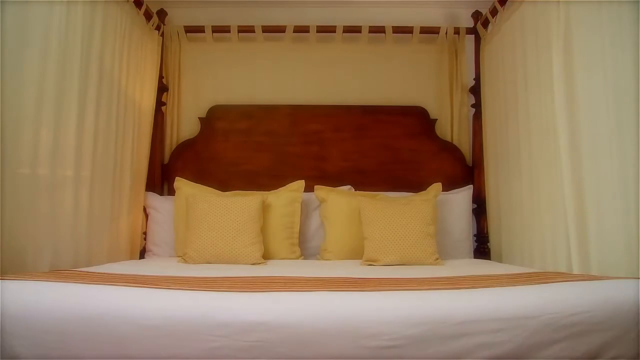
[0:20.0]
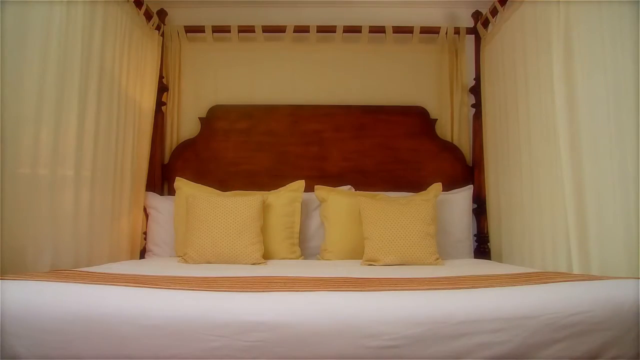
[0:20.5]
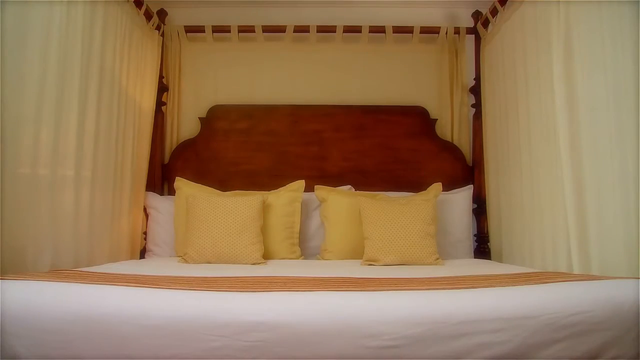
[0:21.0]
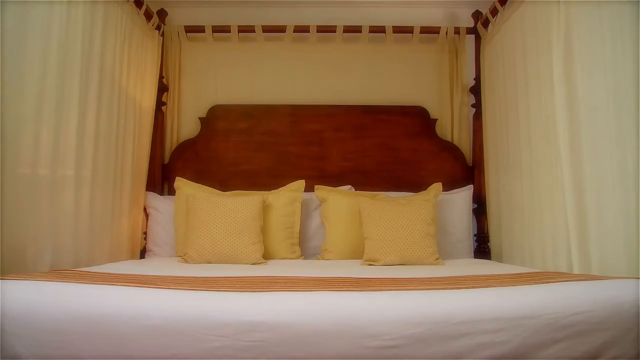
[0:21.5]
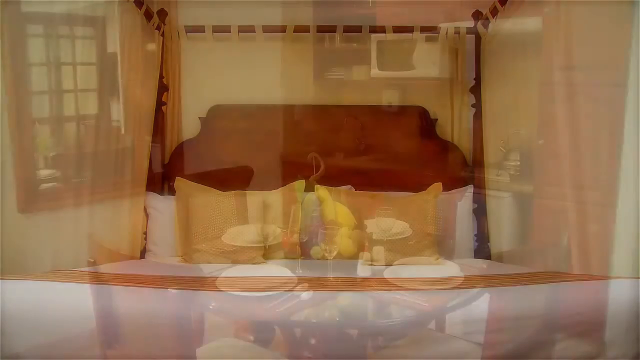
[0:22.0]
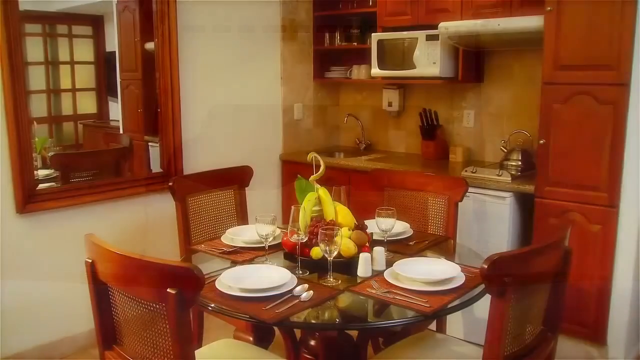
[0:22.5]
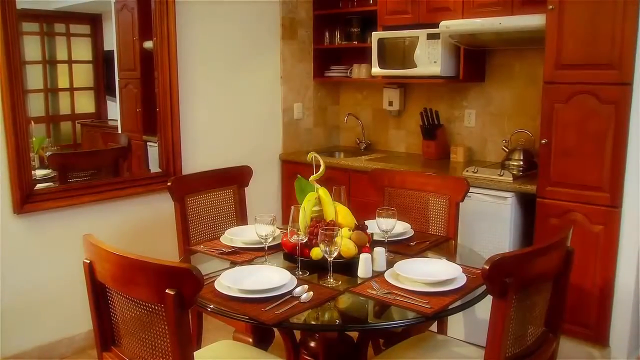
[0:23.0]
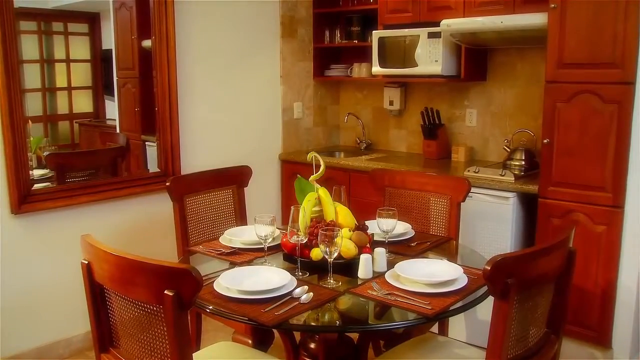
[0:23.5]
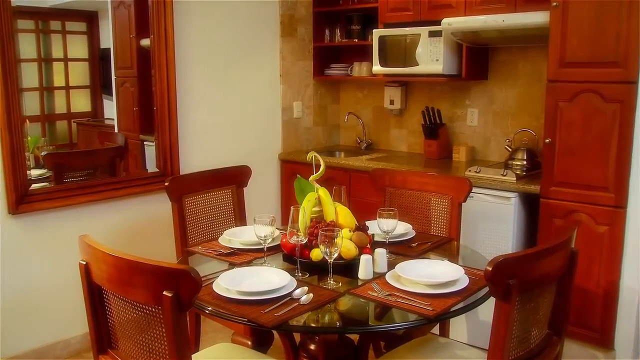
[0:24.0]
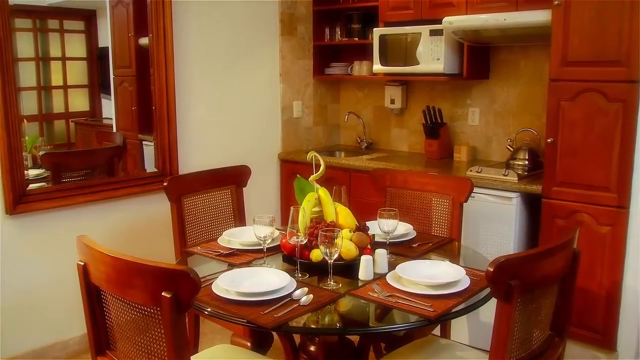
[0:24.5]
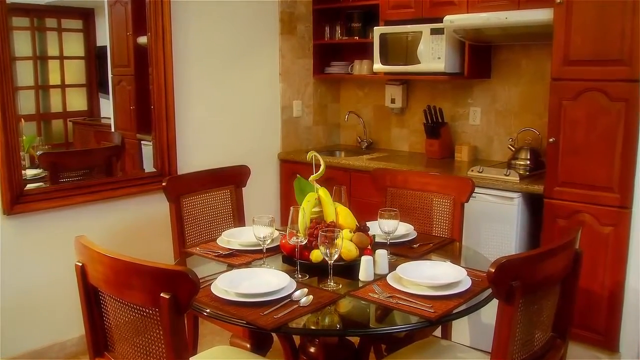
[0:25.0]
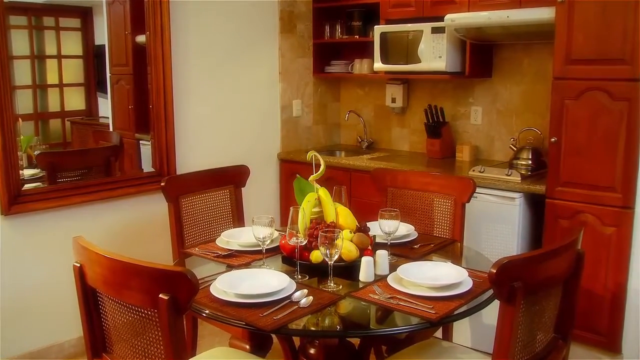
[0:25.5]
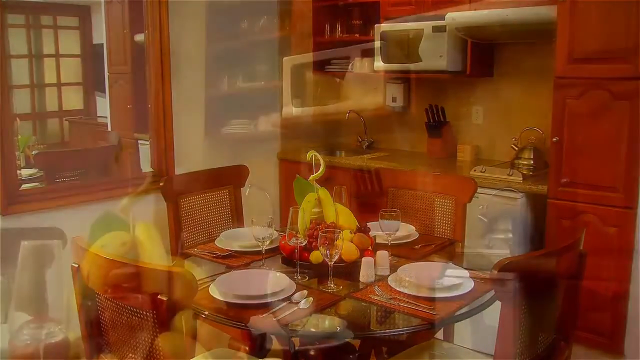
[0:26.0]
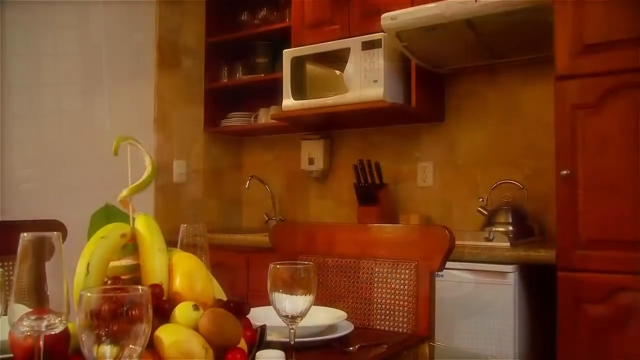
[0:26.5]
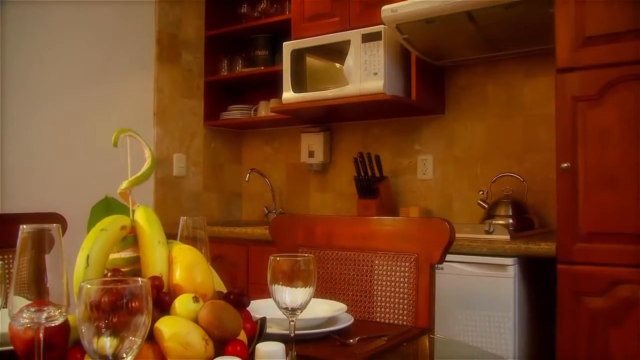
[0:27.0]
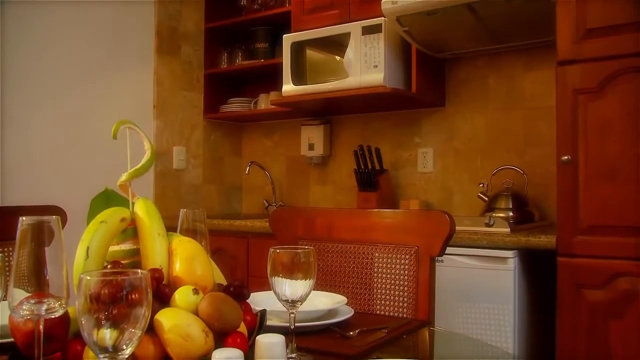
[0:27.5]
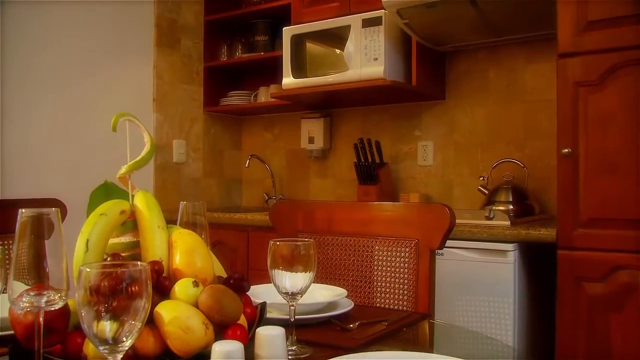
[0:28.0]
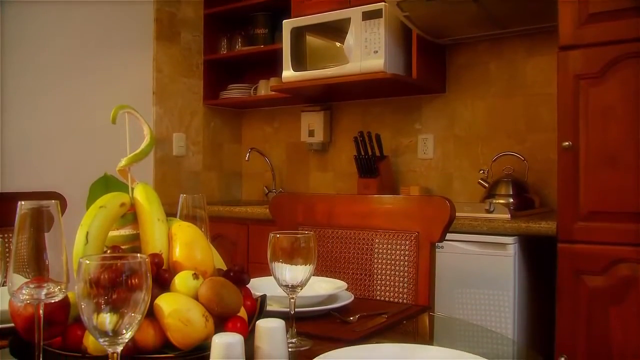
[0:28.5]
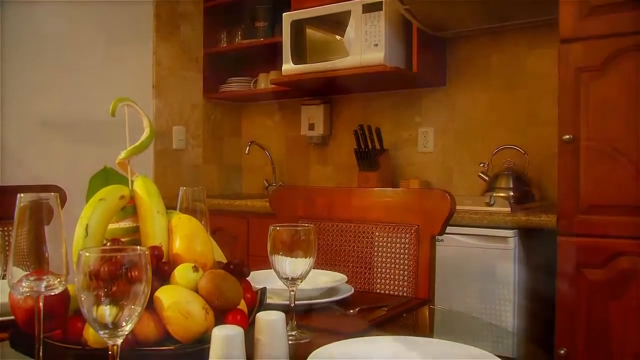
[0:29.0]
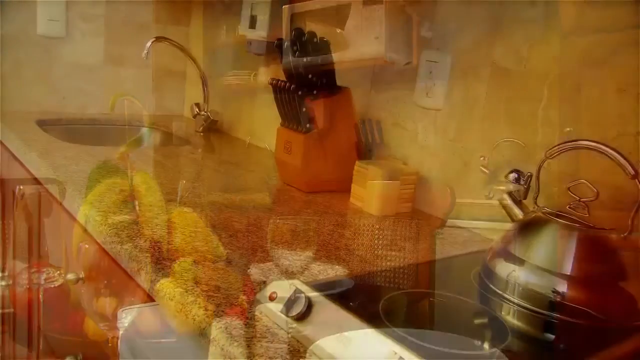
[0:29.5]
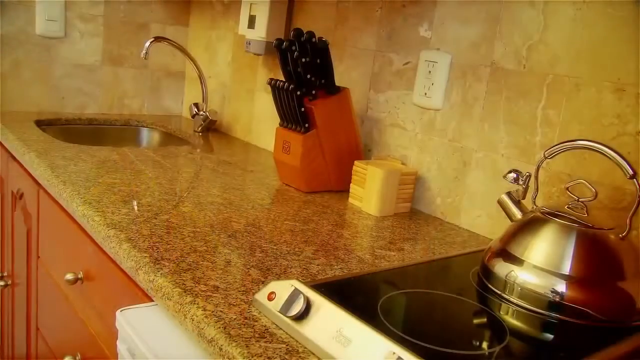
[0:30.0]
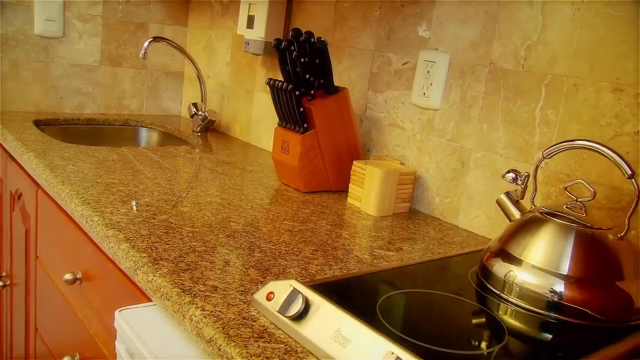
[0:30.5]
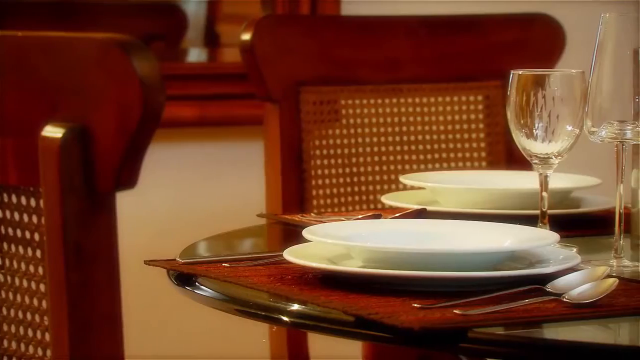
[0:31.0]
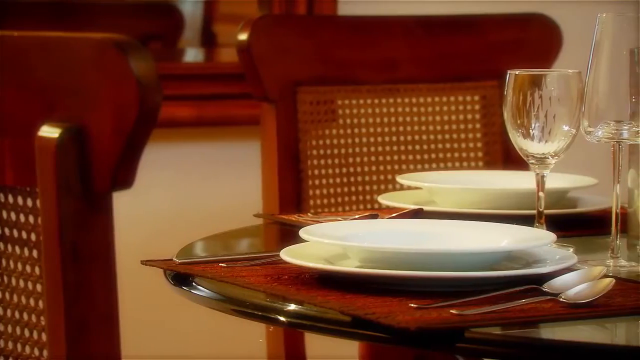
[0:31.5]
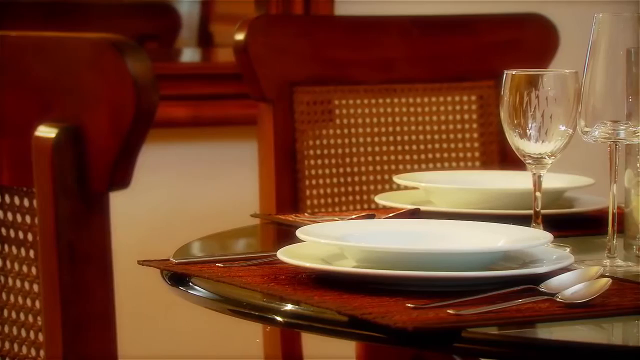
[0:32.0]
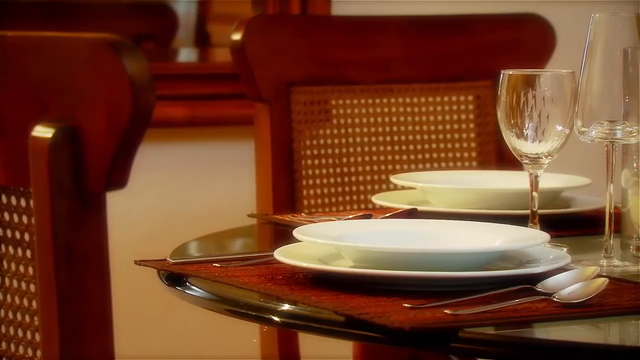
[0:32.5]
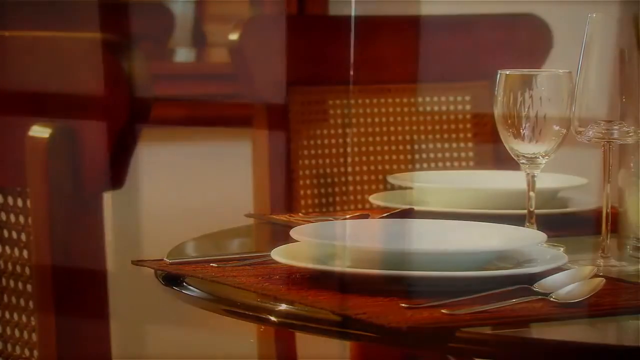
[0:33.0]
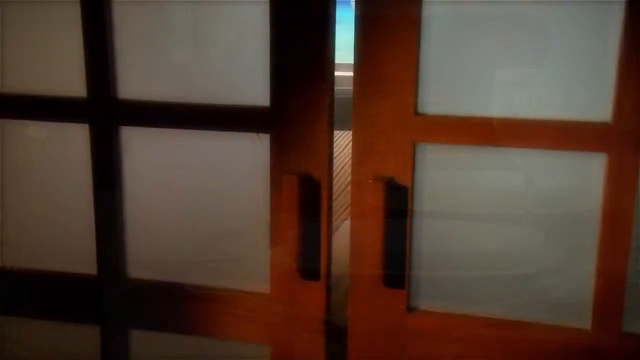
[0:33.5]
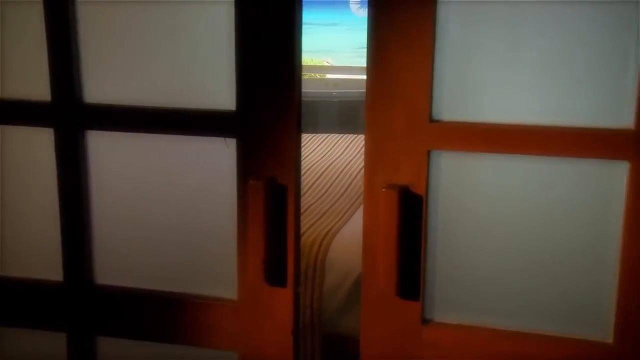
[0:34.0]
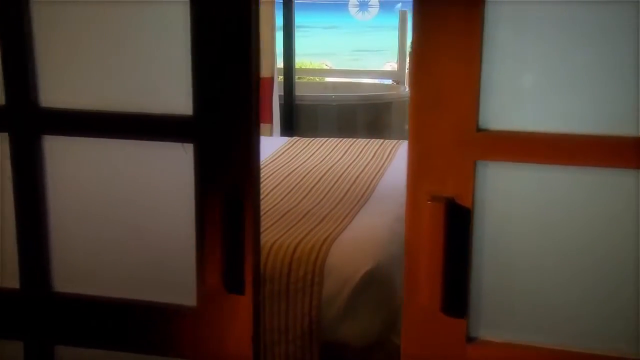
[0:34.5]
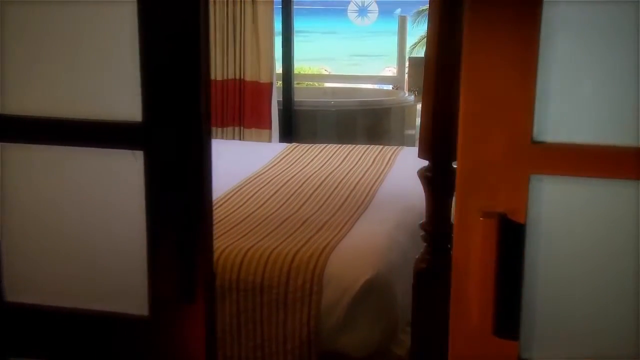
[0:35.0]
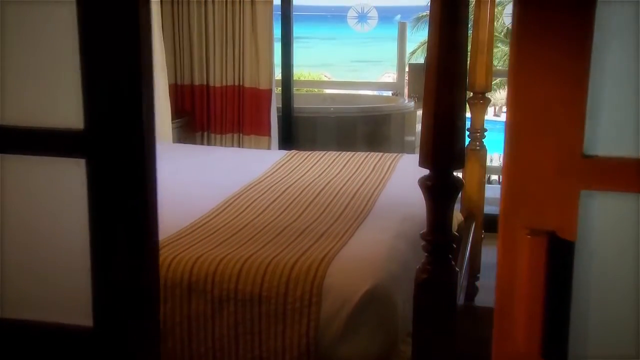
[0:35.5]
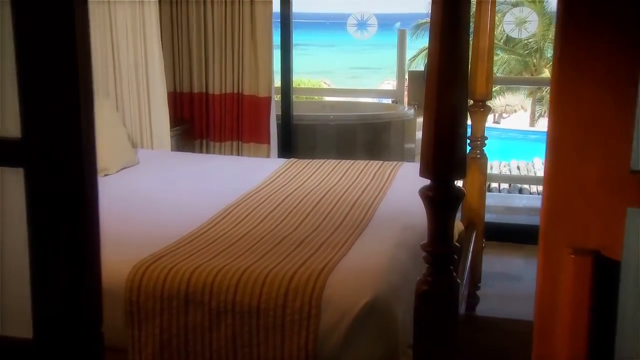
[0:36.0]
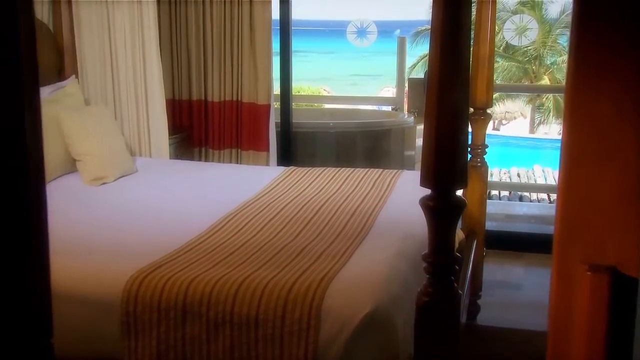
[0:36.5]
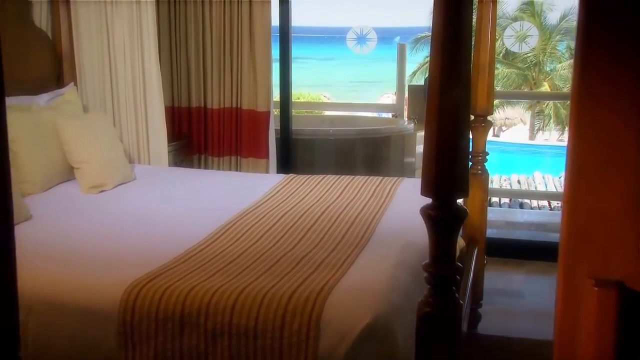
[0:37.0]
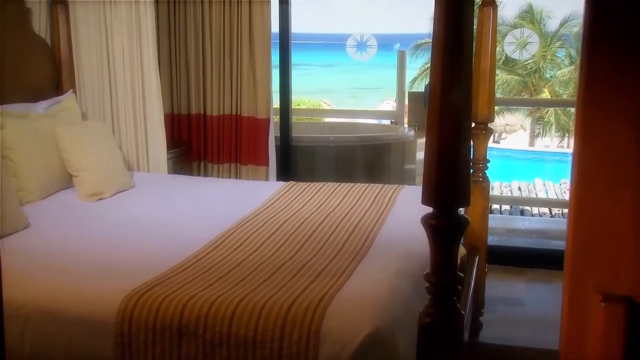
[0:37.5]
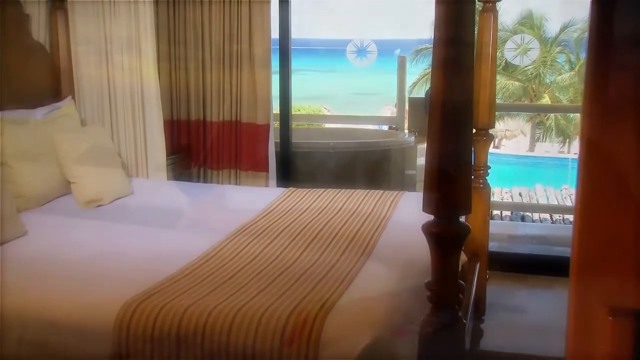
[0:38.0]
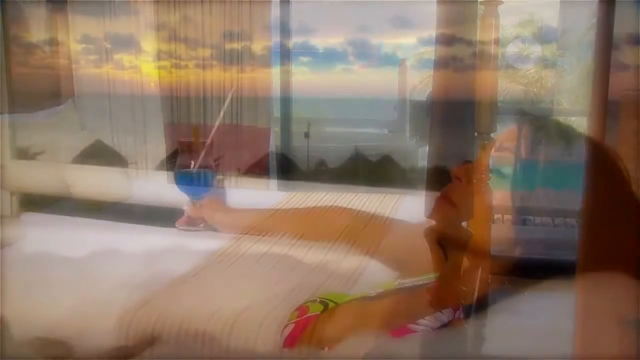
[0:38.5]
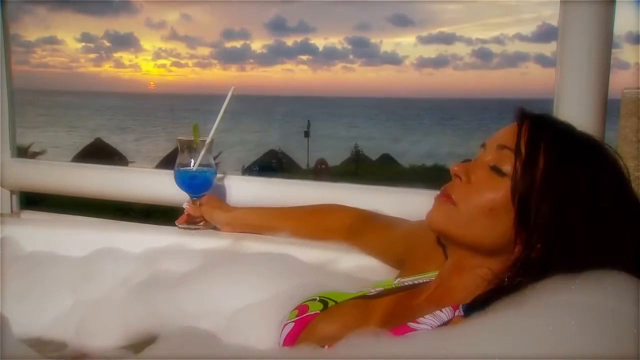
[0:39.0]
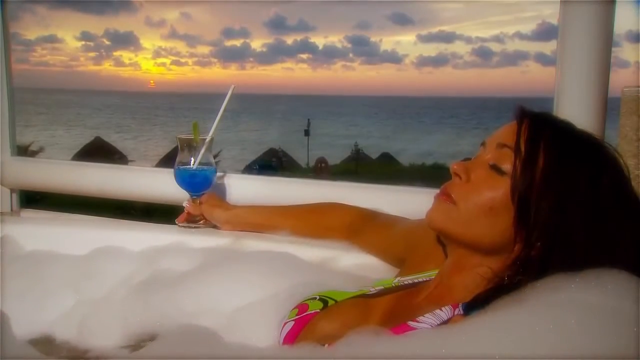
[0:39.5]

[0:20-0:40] The camera stays in front of the bedroom, then shows the kitchen area, which has a brown and white colour combination. There is a round glass table with four wooden chairs around it; on top of the table are four placemats, four round plates, four bowls and a fruit bowl. The camera shows the kitchen from a slightly different, closer angle on the table, then a closer angle of the kitchen sink and part of the stovetops, then a closer angle of two of the placemats on the table. Two doors open to show the bedroom, and by the bedroom there is a view of the beach and the pool. The shot ends with a woman inside a tub holding a blue drink.